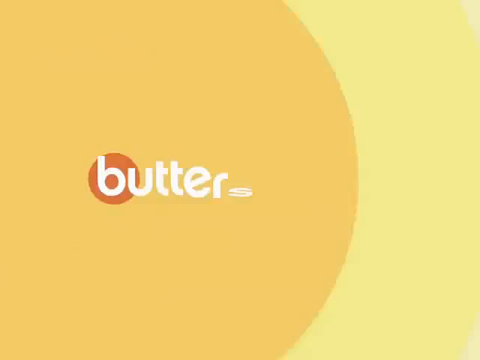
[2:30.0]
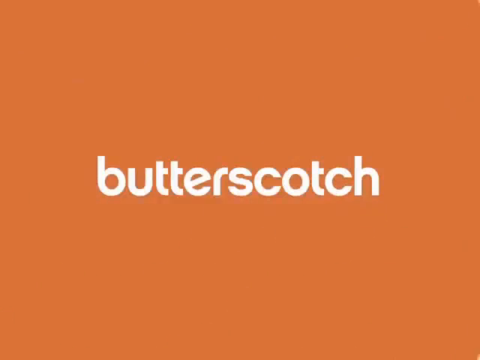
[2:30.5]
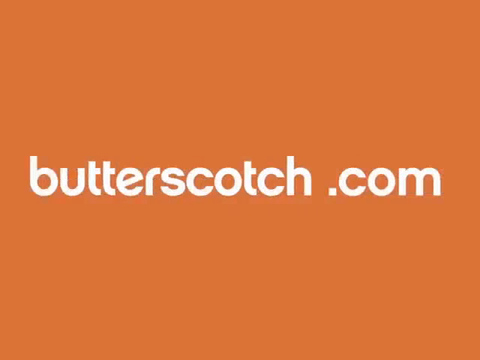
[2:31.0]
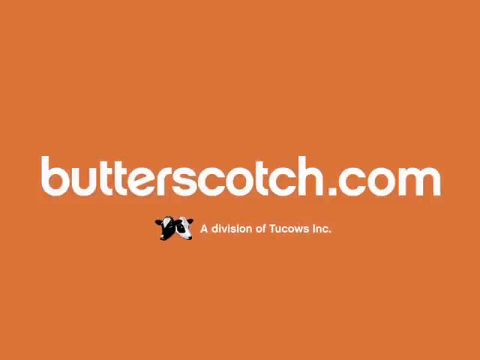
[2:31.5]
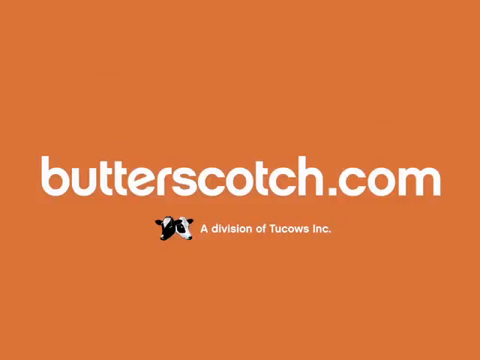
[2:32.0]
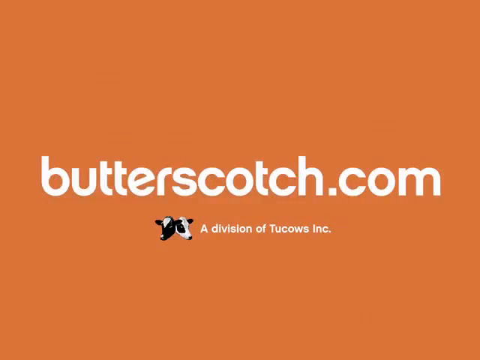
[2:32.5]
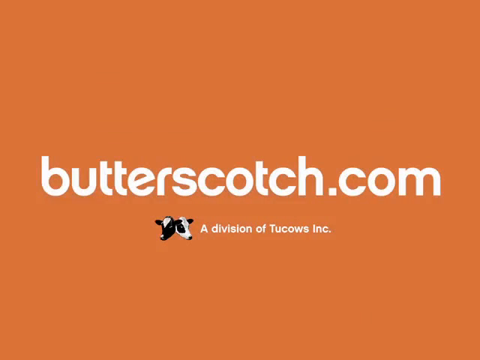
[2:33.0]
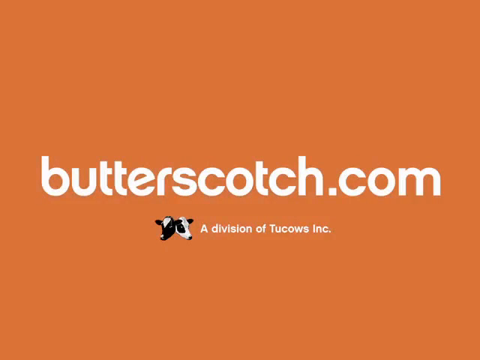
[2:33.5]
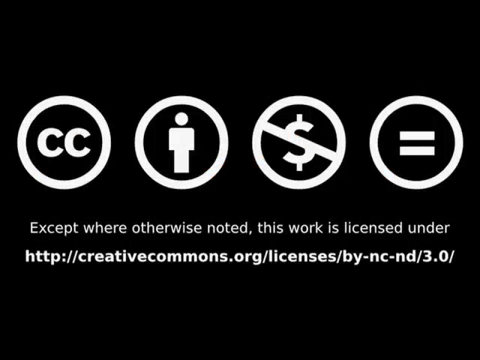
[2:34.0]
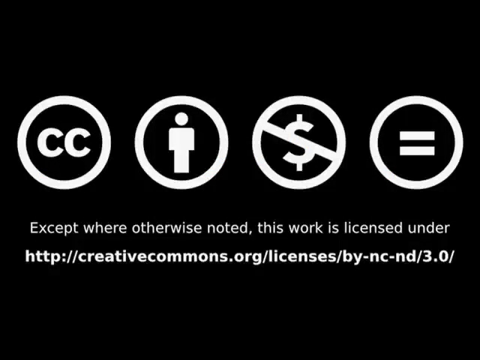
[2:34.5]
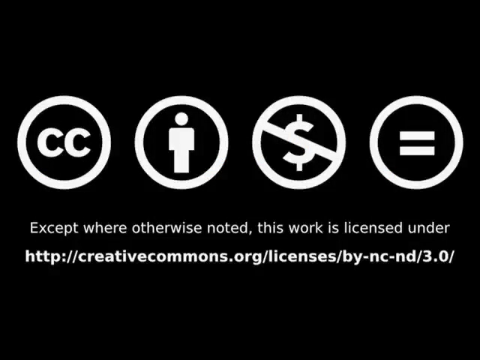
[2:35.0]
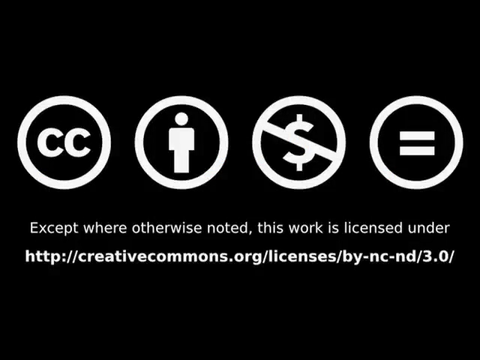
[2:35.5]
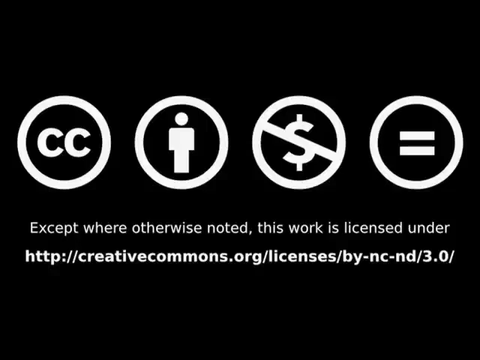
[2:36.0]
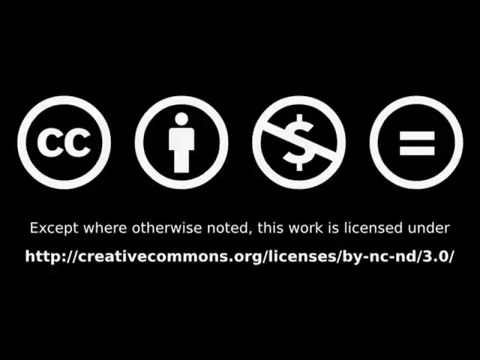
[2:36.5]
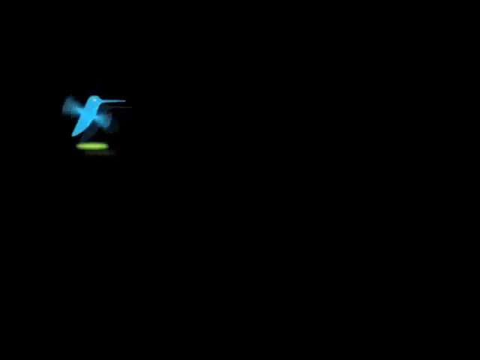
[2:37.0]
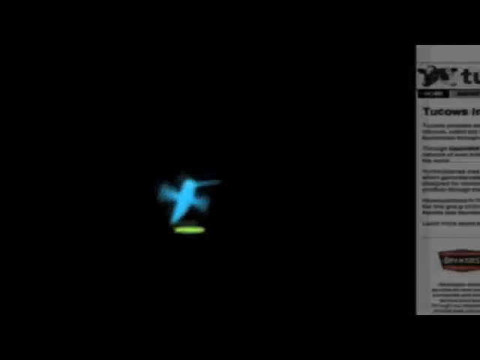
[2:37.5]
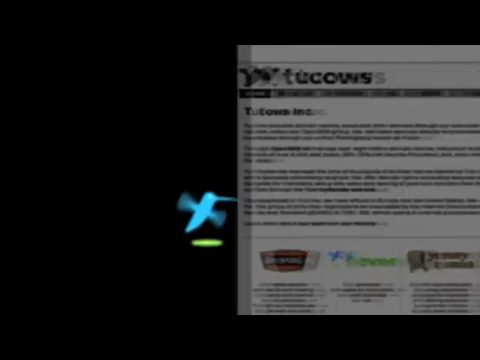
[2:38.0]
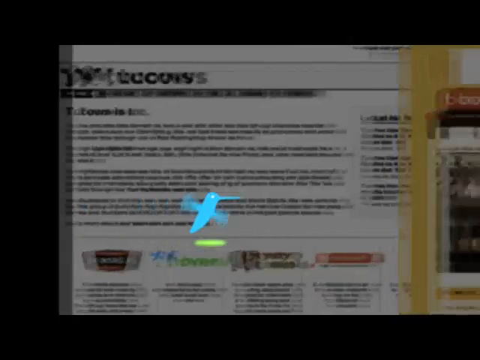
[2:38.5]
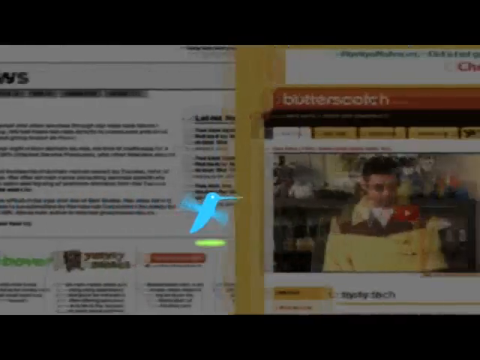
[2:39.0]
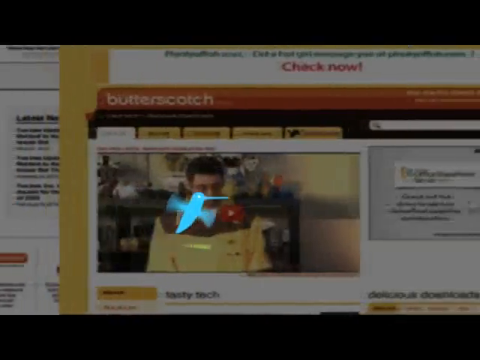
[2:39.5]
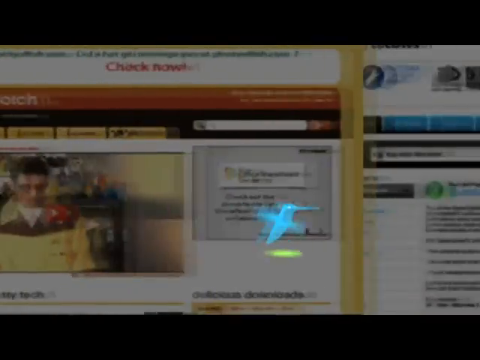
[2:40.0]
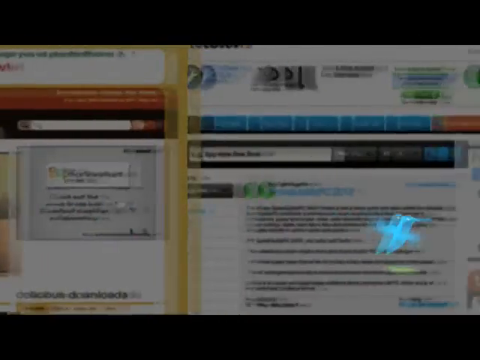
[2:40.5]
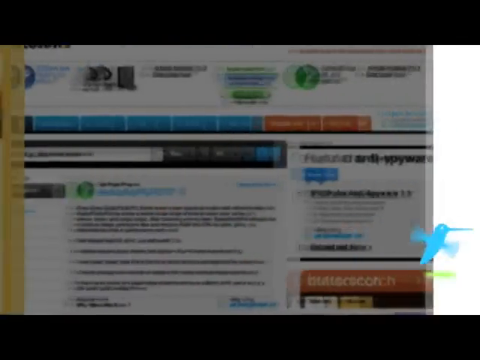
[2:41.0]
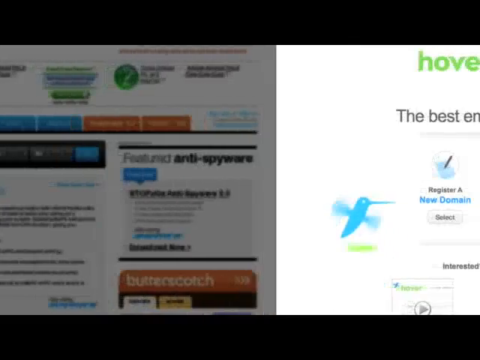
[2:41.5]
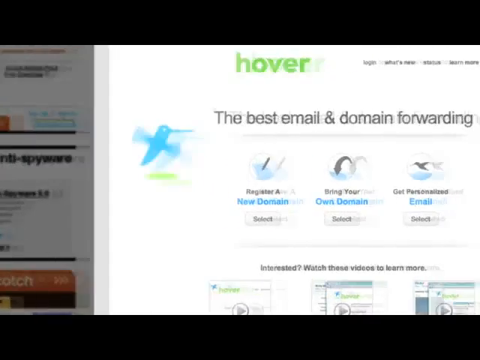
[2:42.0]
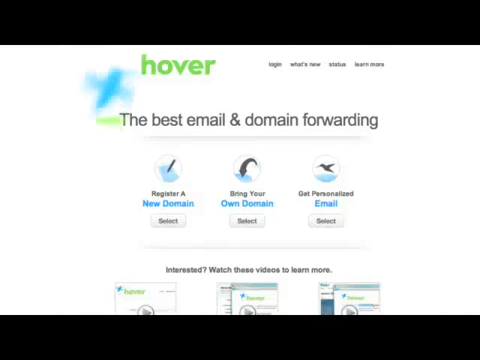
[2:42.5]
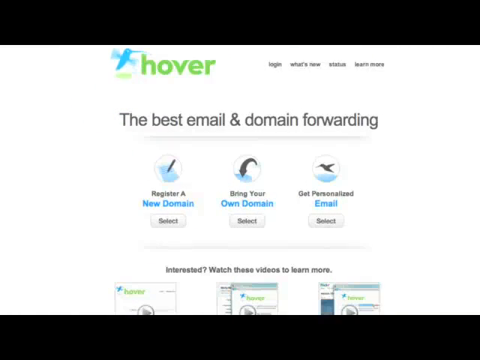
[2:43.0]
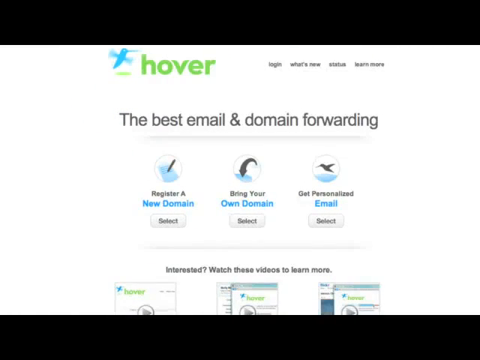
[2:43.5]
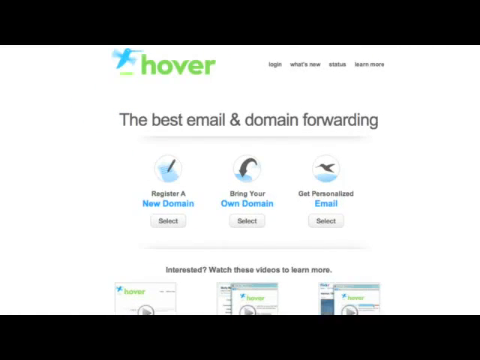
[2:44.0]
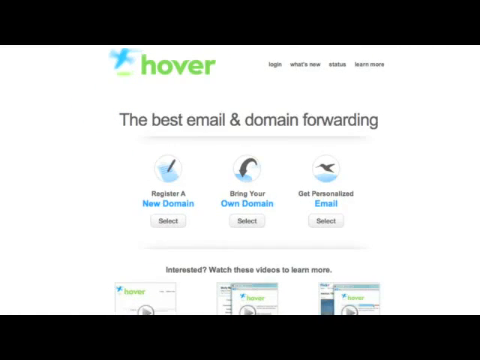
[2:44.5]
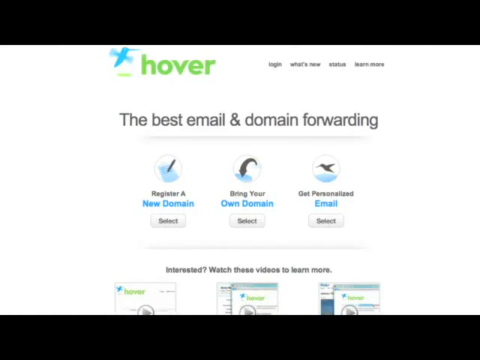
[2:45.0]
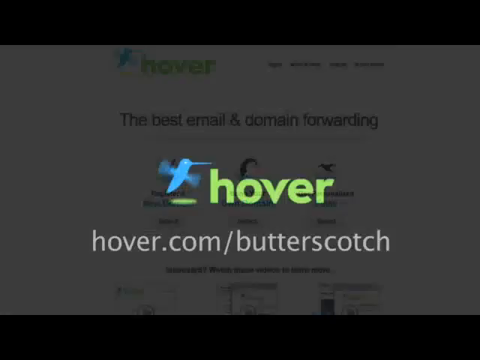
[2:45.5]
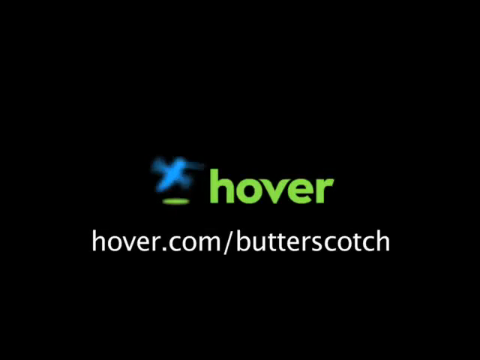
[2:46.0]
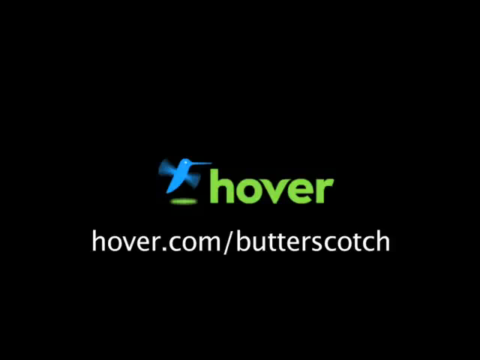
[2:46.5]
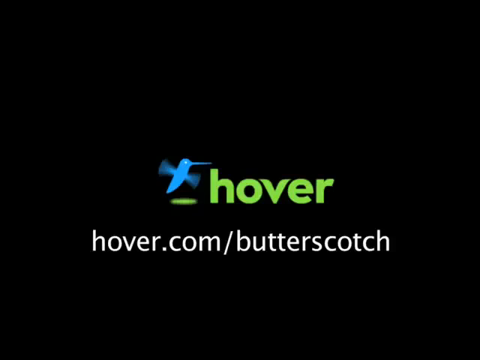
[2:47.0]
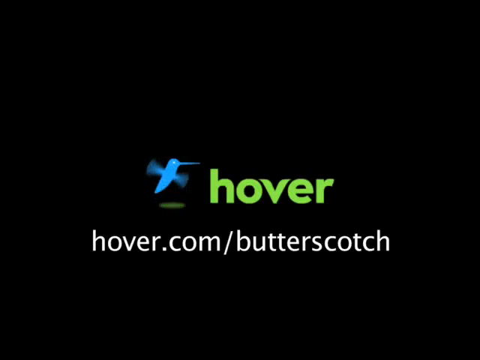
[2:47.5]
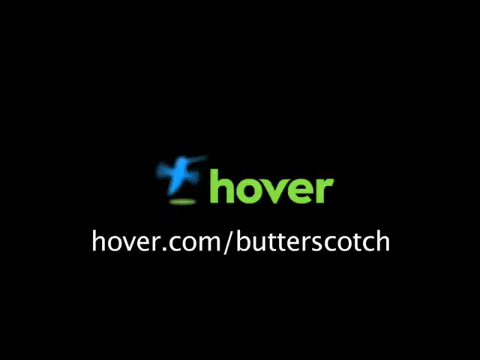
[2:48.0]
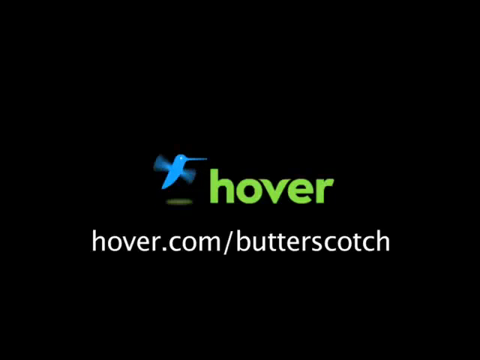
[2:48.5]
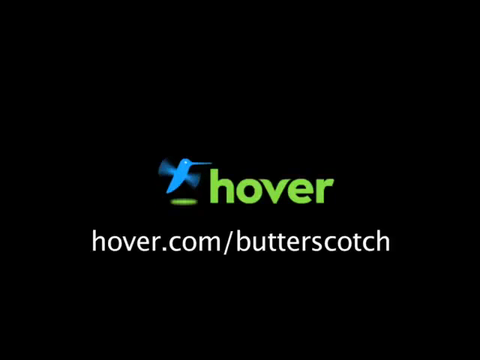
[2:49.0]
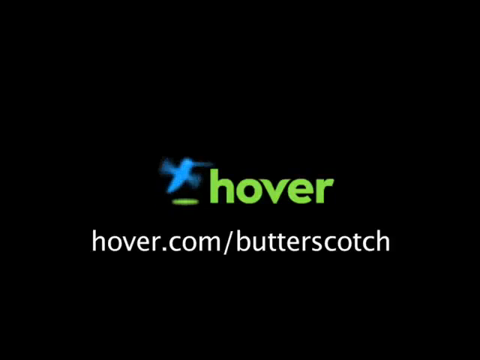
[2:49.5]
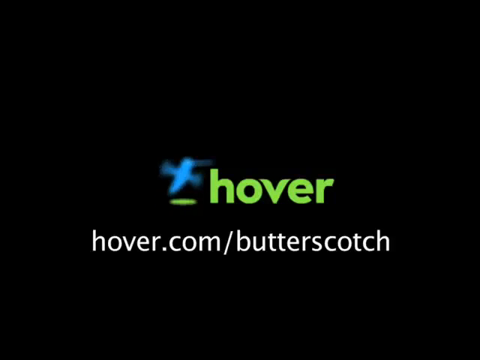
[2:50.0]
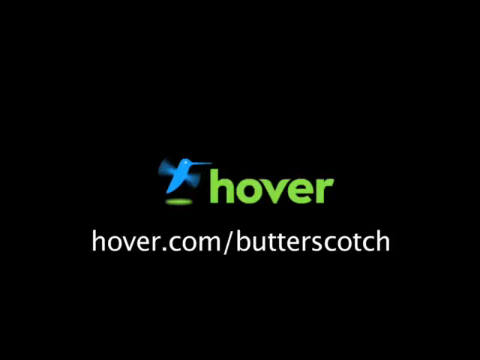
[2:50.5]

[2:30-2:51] The view moves off the Wikipedia page to an all-yellow background, where "butterscotch" appears in white lettering in the center. The background switches from yellow to orange, and ".com" comes in from the right to touch "butterscotch," which vibrates slightly back and forth. Below it are drawings of two cow heads: one is black with white on top, and the one on the right is white with black hairs and black around the eye. To their right, small white lettering says "the Division of Tucows, Incorporated." The screen switches to all black with four white circles across it: the first contains "CC," the second the outline of a person, the third a dollar sign with a slash through it, and then an equal sign. Underneath is text ending "this work is licensed under," with a link beneath it. That moves off, the screen goes black, and a little blue outline of what looks like a hummingbird comes from the top left corner down to the center, about two inches from the bottom, with what looks like a little yellow light below it. From the left, about four blurry images like computer screens scroll across until a white one appears; the bird moves up to the top left corner with "hover" to its right and more information about the site. The hummingbird vibrates. Then, on an all-black screen, the hummingbird is in the center slightly to the left, head pointing right, with "hover" next to it and "hover.com\butterscotch" underneath. The hummingbird moves slightly back and forth, its wings appearing to flutter very fast.